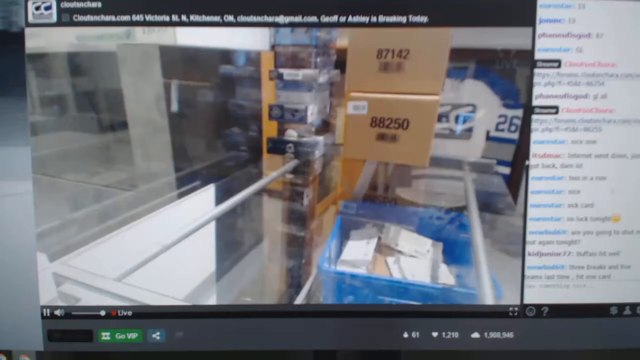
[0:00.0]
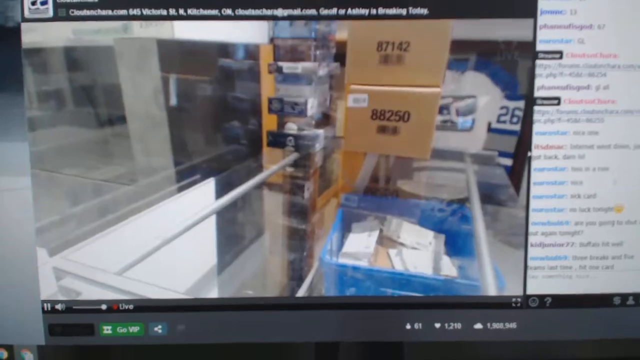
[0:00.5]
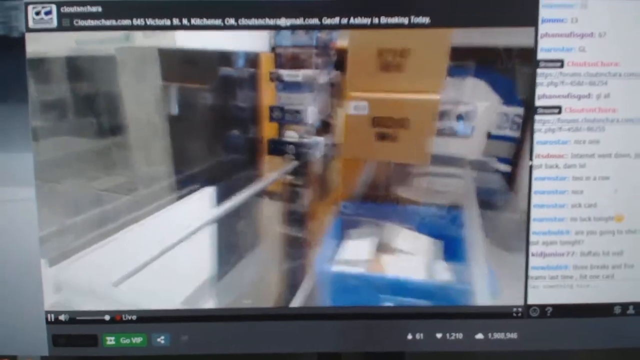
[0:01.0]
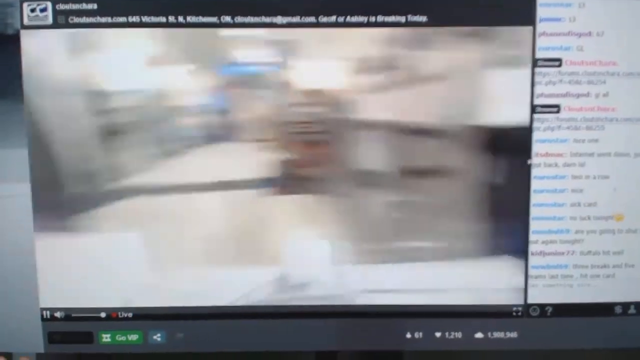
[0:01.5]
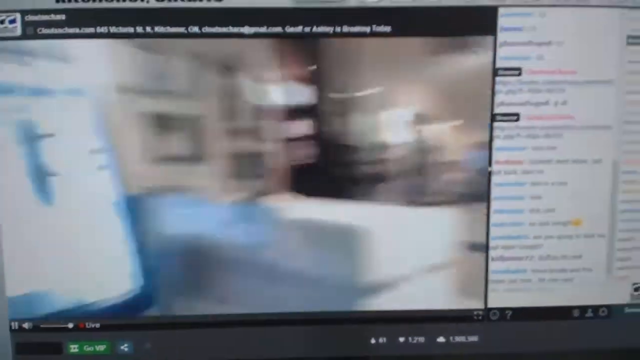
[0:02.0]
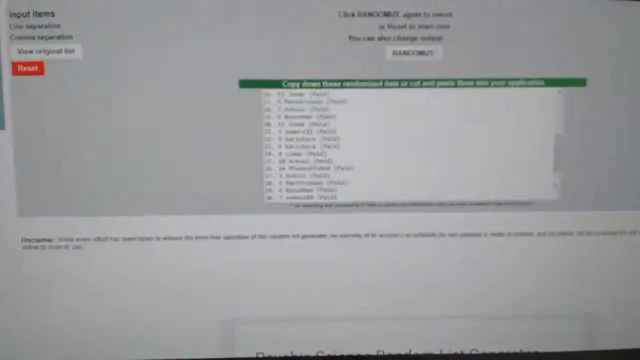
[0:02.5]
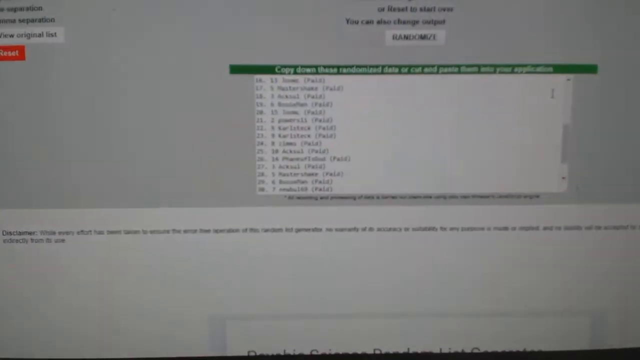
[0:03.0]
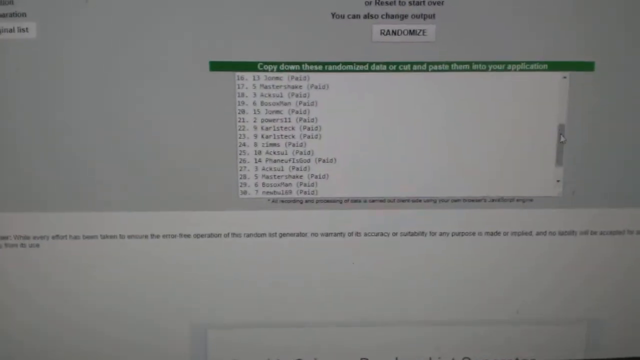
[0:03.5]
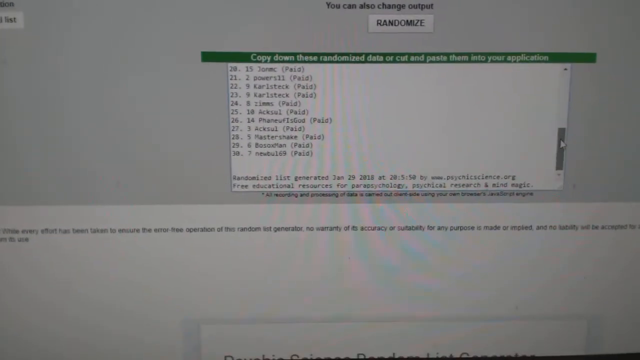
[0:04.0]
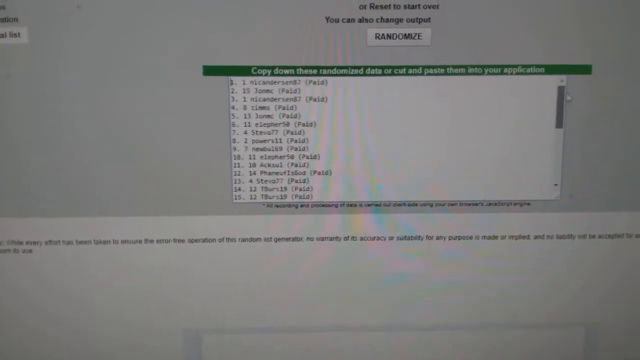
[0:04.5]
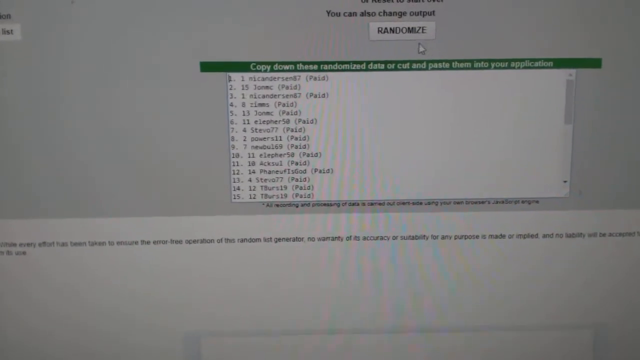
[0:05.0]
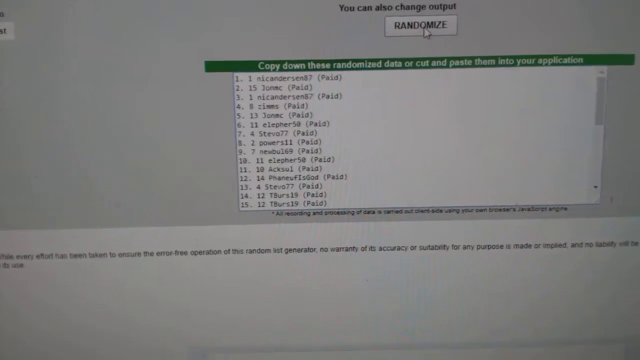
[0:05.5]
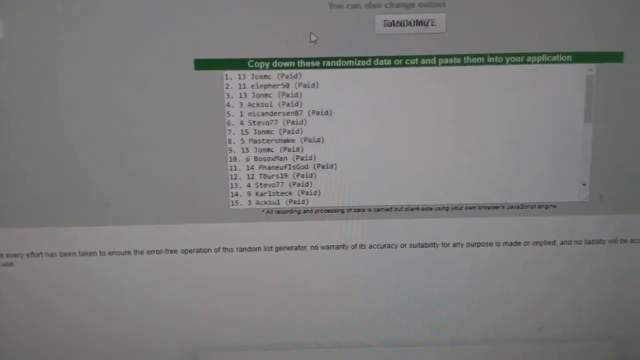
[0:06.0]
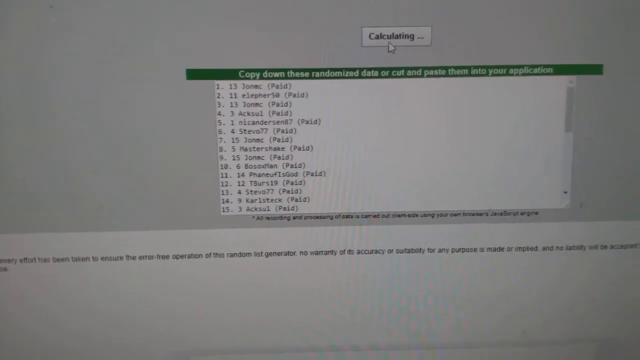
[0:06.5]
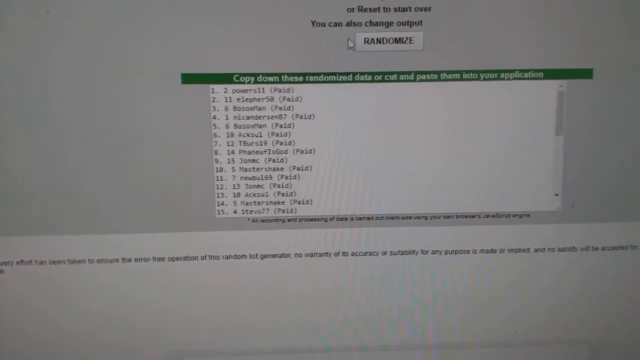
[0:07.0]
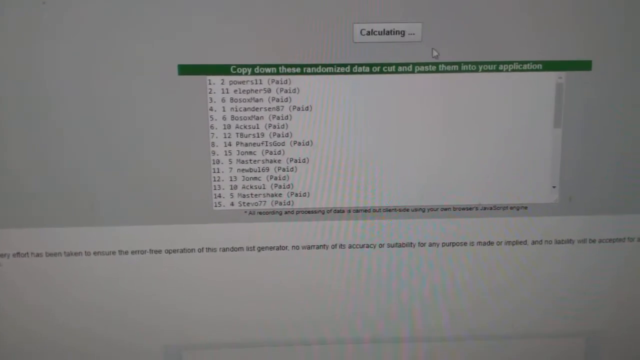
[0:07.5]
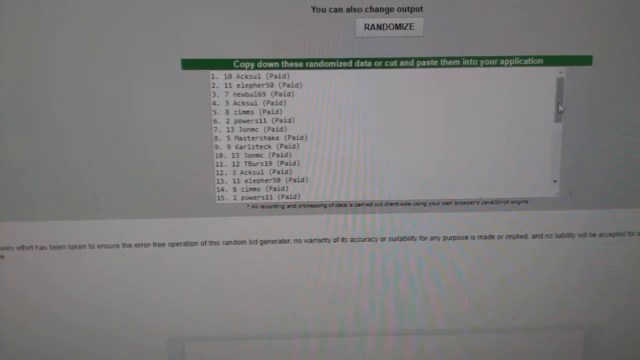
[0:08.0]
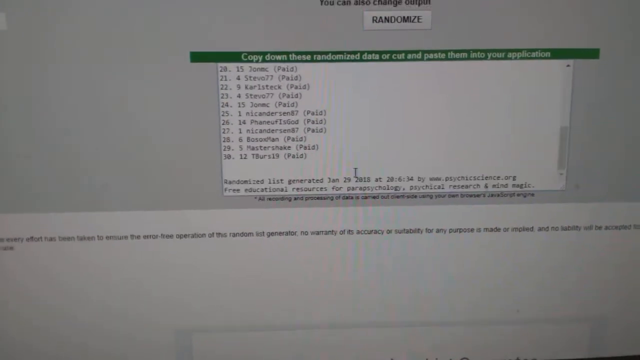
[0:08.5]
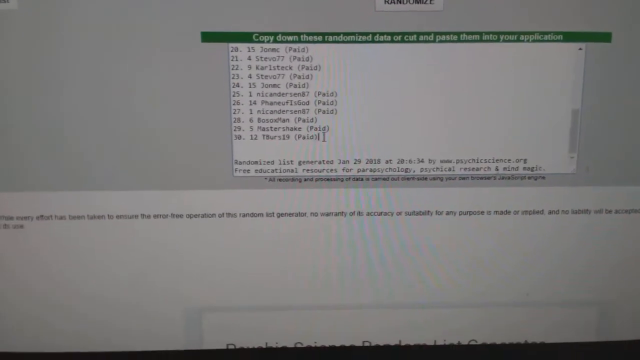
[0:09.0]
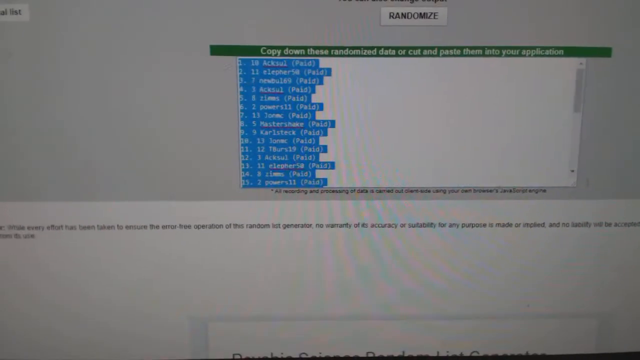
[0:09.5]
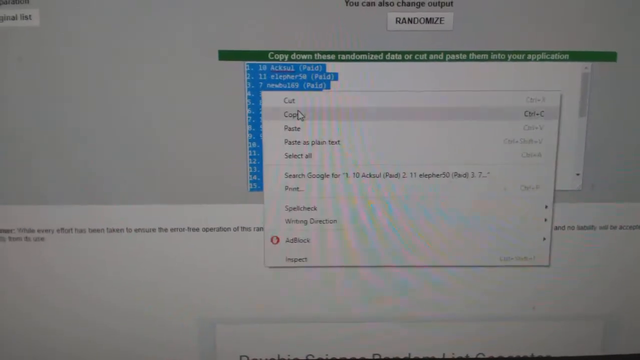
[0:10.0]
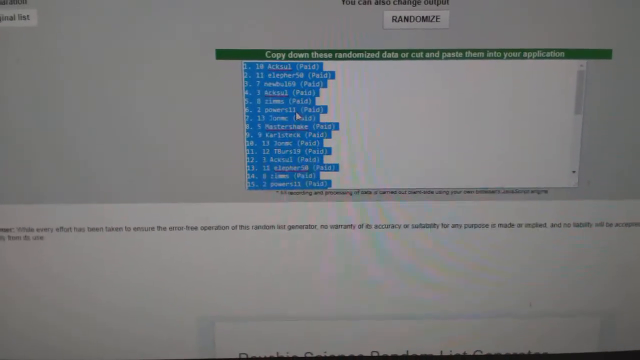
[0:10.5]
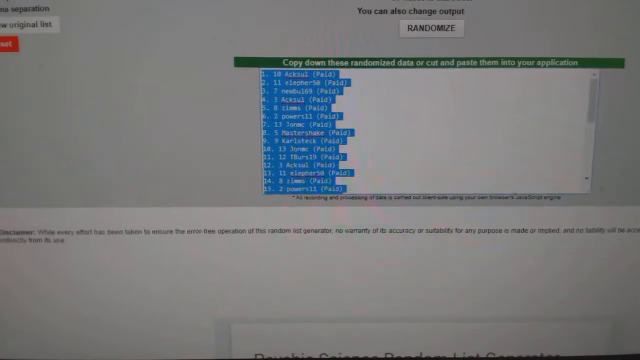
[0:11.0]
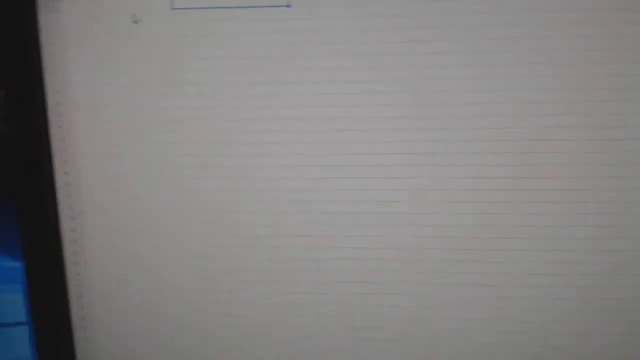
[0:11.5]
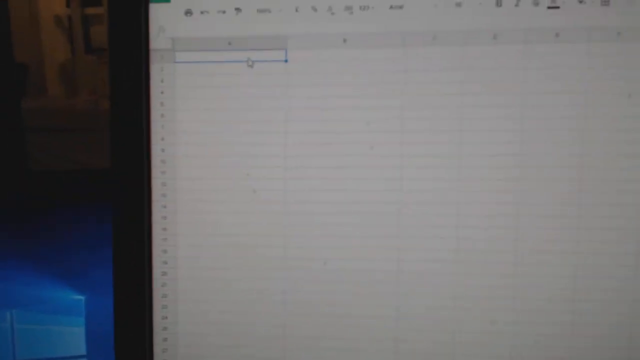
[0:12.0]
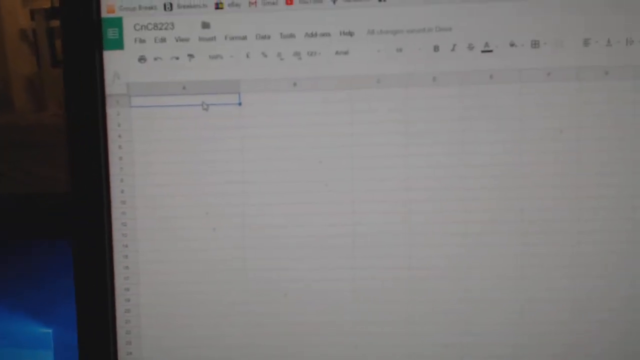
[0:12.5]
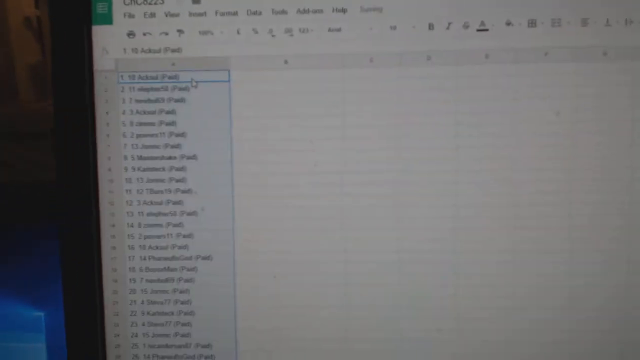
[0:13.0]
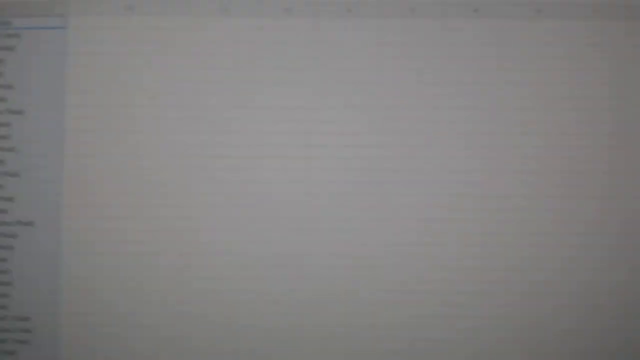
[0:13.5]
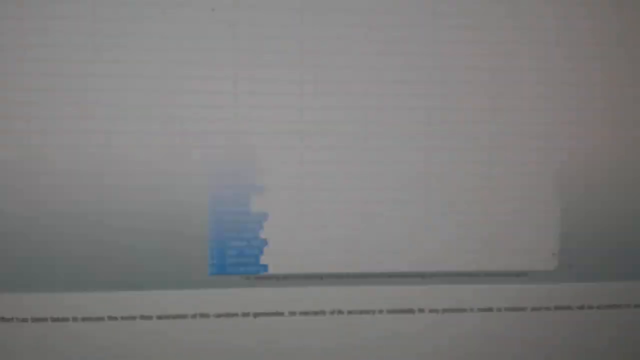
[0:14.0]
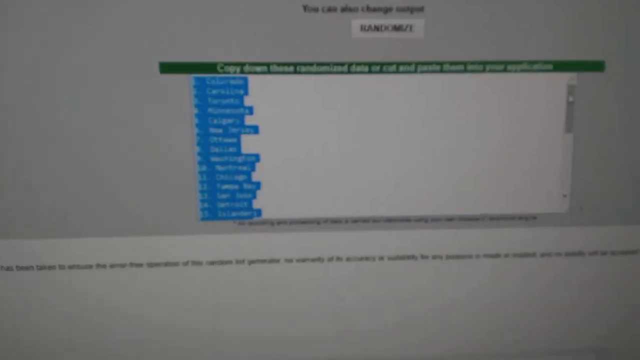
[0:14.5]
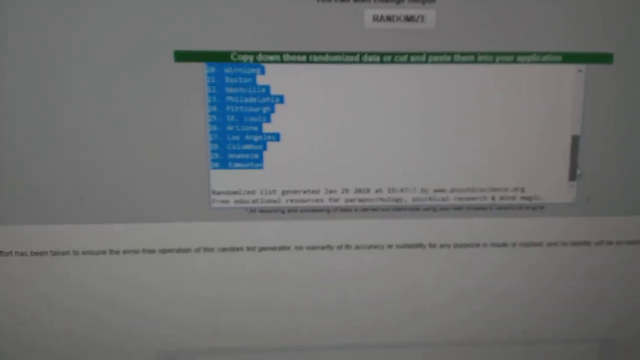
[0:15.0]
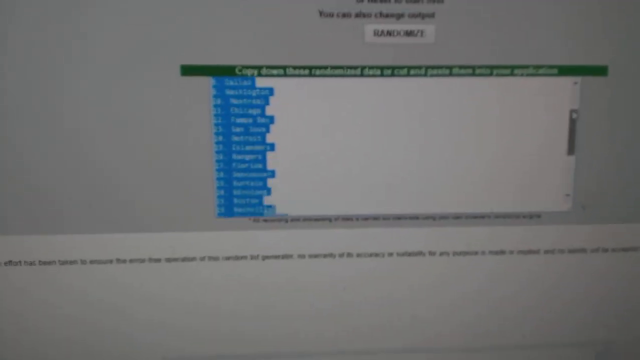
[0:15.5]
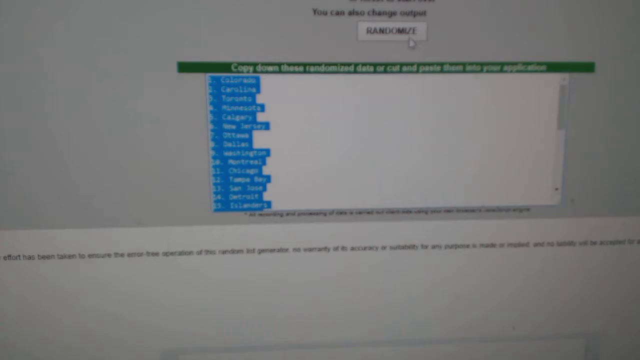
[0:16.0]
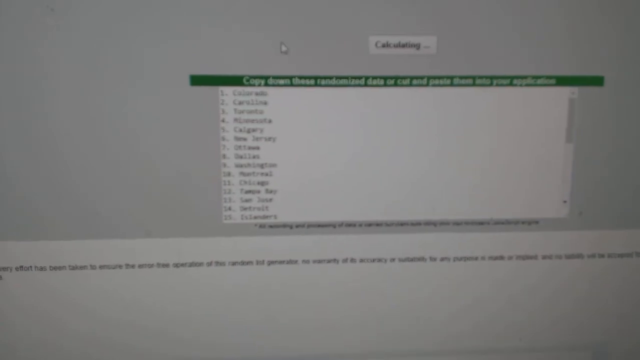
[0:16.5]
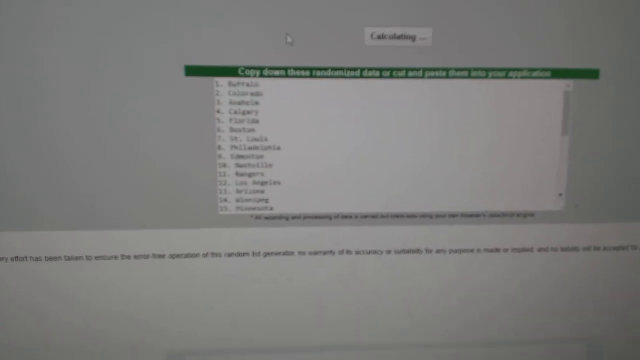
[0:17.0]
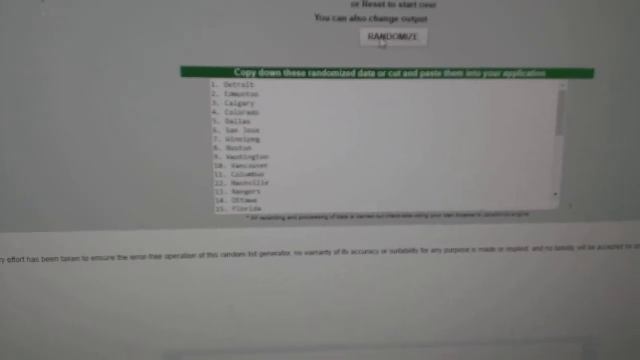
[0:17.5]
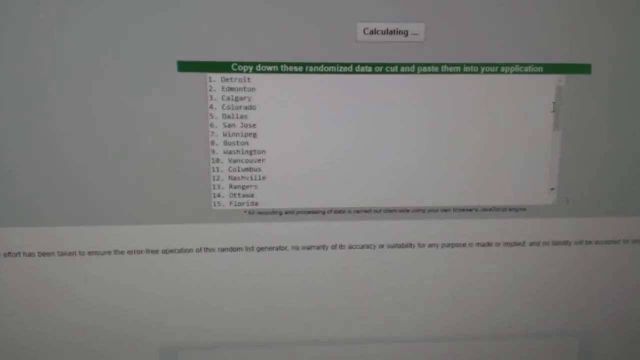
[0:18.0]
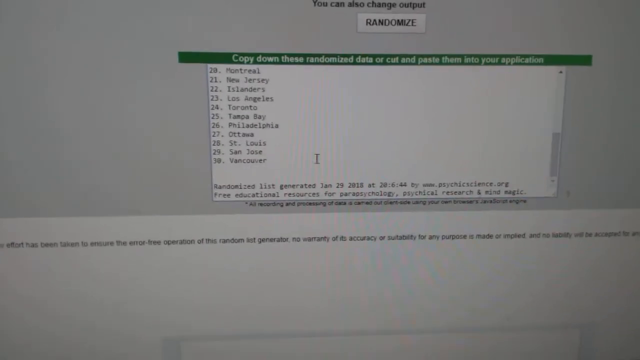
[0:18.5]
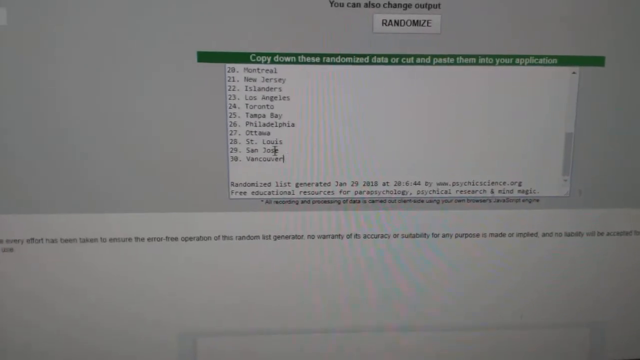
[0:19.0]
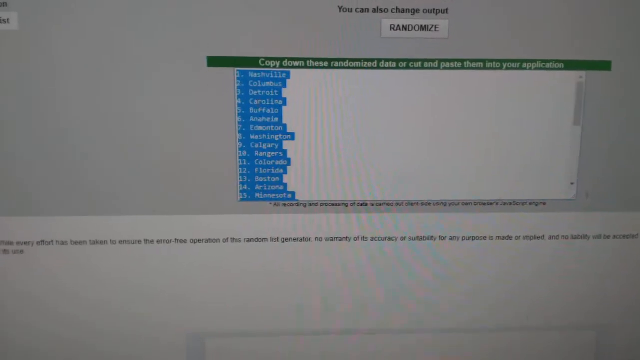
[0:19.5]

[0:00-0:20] A computer screen shows a drop-down list of what looks like data and files, and the view scrolls down through the file names. The cursor clicks on the copy option. A picture of what looks like cardboard boxes and a big sorting bag with parcels in it also appears, apparently some sort of warehouse. The screen is being used by someone else rather than shown in a first-person format, with the person scrolling down, copying things and looking at files, possibly to keep track of and save files in a workplace setting.